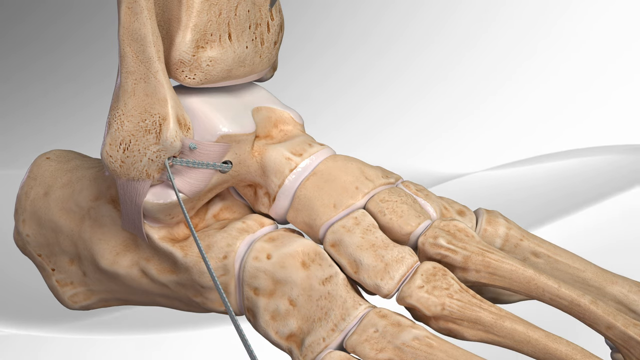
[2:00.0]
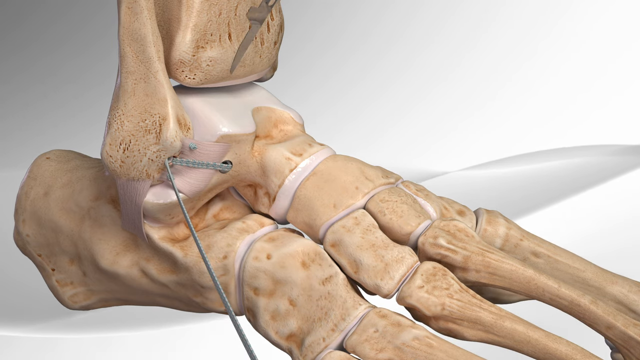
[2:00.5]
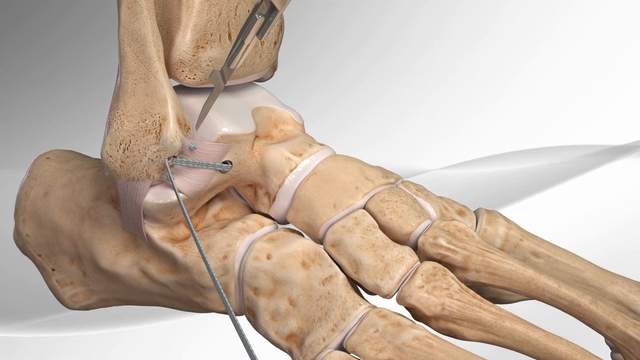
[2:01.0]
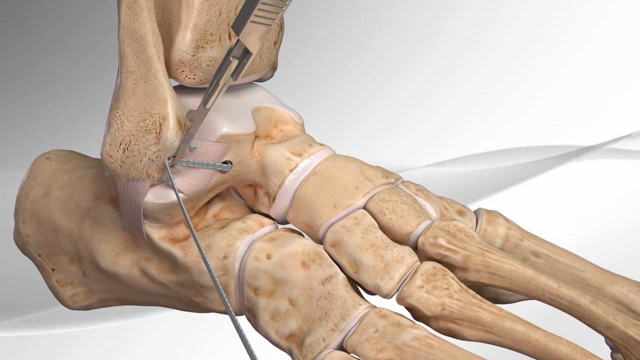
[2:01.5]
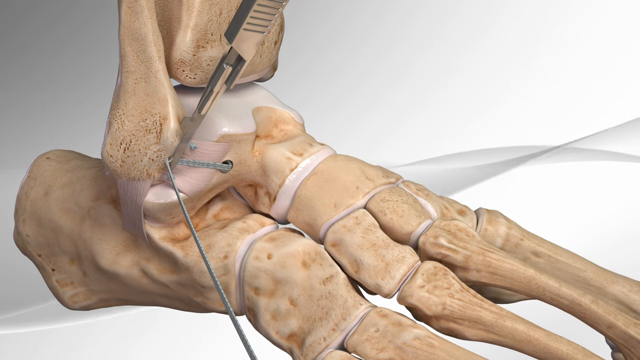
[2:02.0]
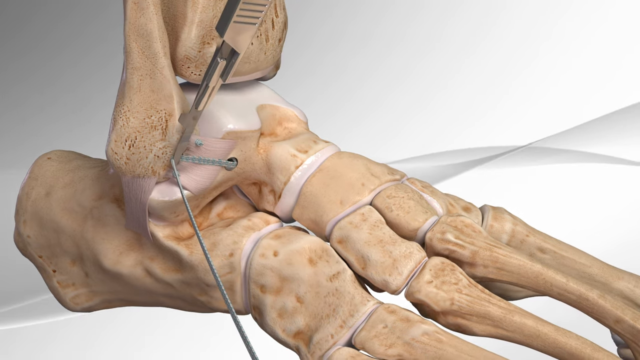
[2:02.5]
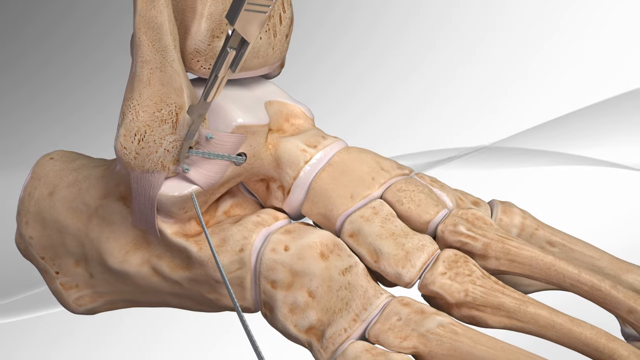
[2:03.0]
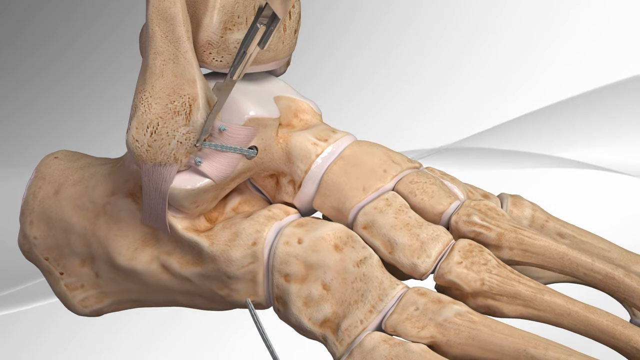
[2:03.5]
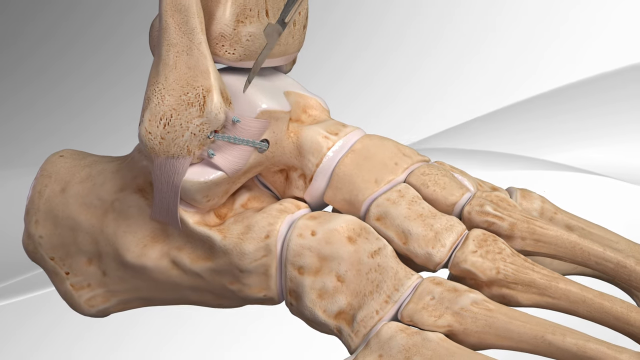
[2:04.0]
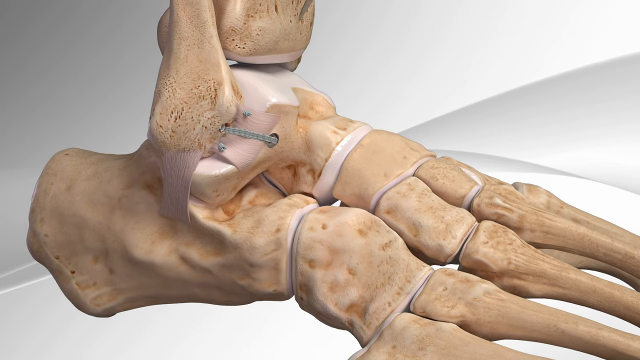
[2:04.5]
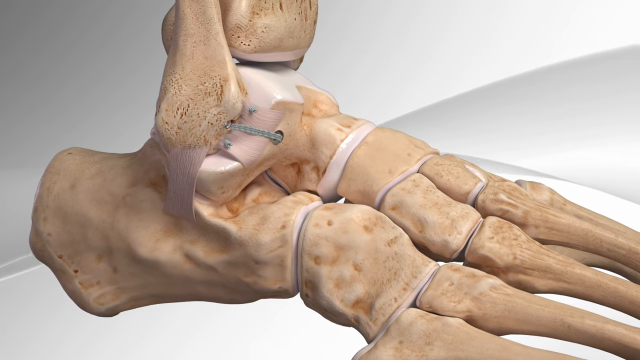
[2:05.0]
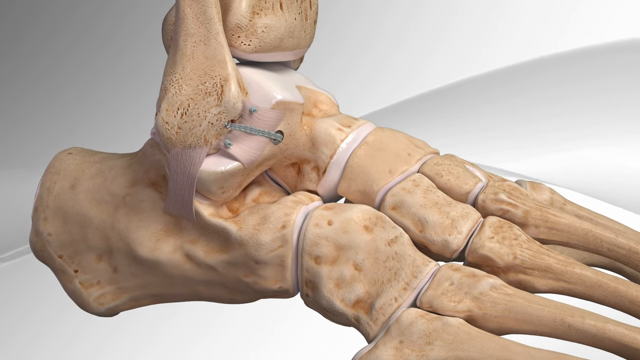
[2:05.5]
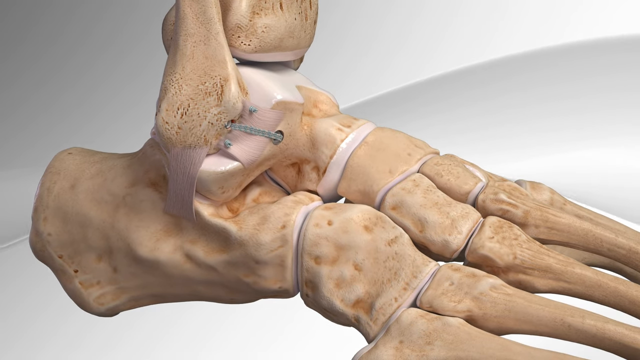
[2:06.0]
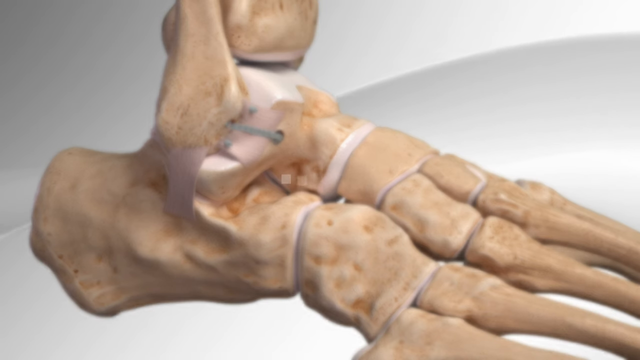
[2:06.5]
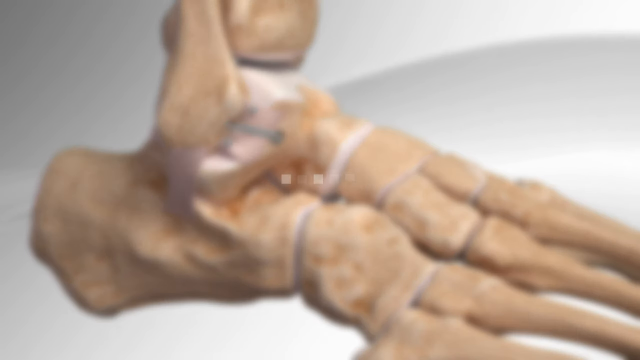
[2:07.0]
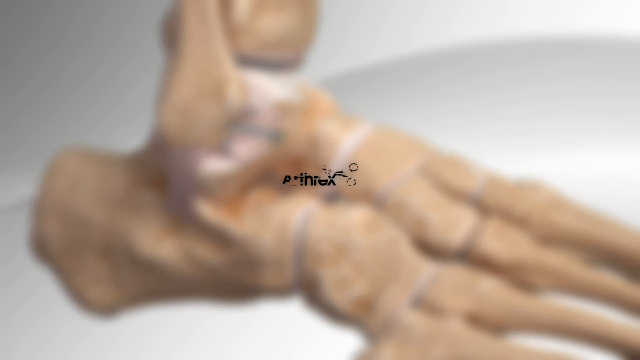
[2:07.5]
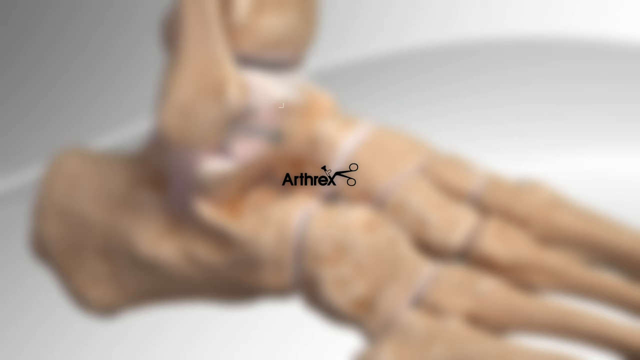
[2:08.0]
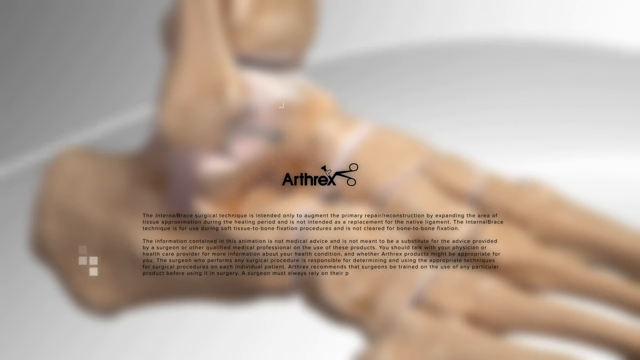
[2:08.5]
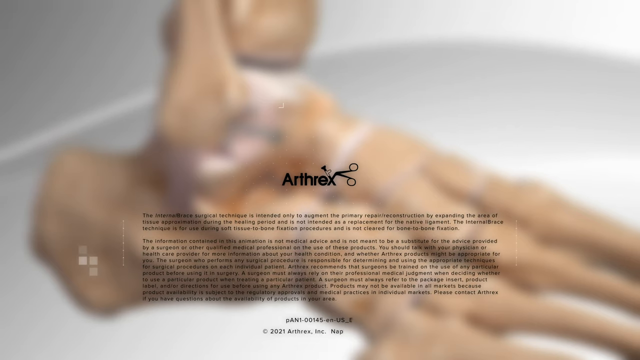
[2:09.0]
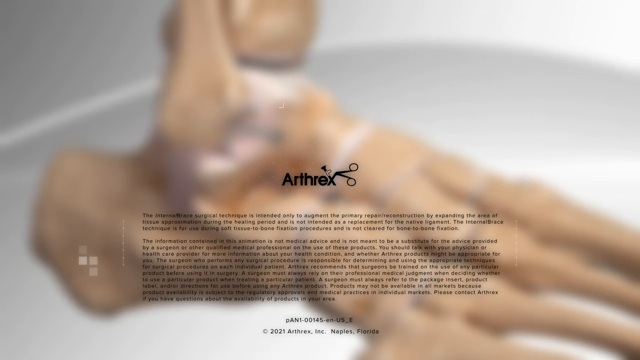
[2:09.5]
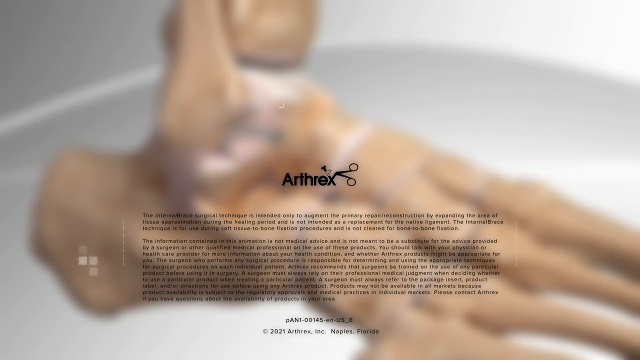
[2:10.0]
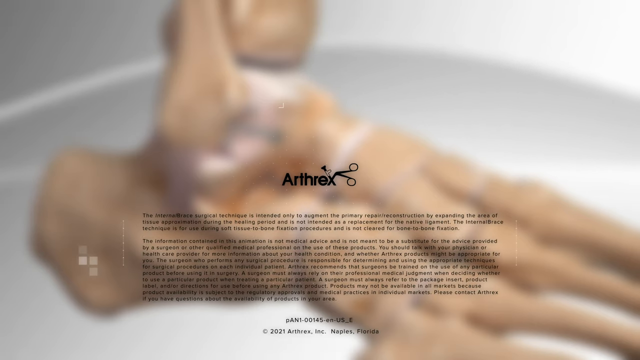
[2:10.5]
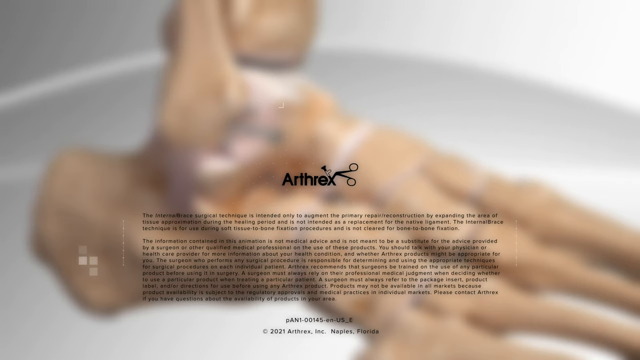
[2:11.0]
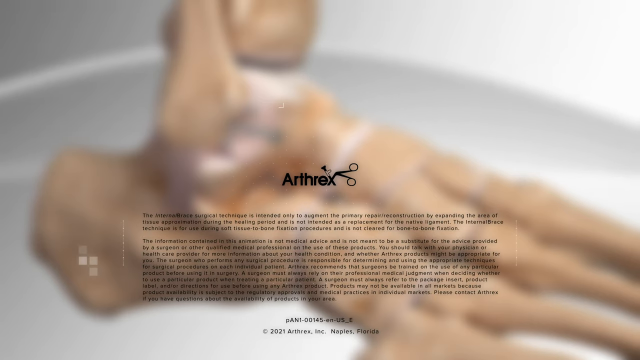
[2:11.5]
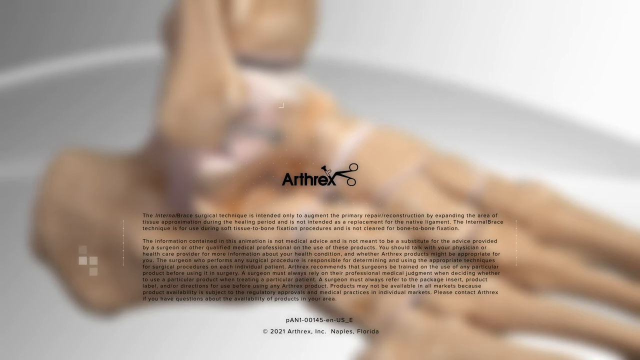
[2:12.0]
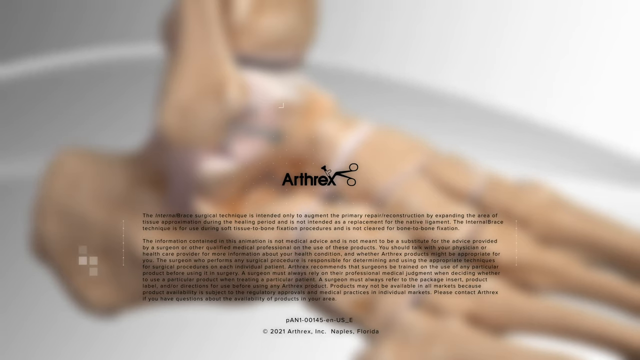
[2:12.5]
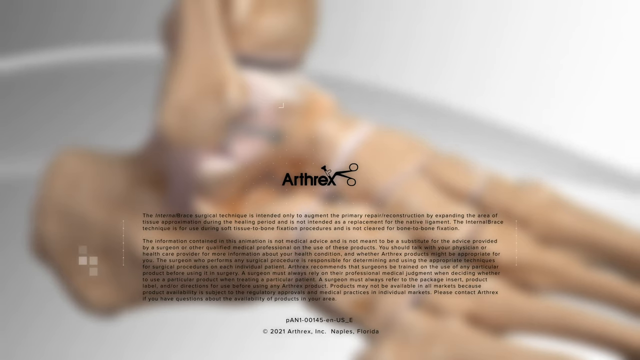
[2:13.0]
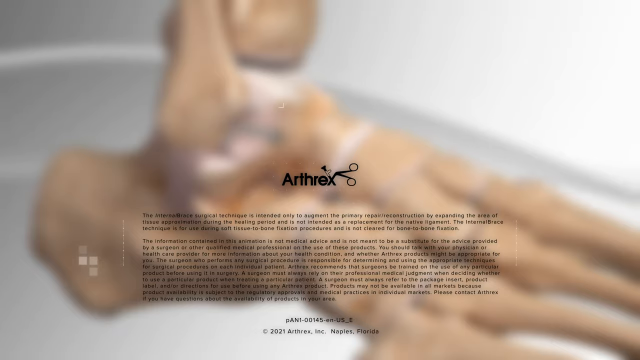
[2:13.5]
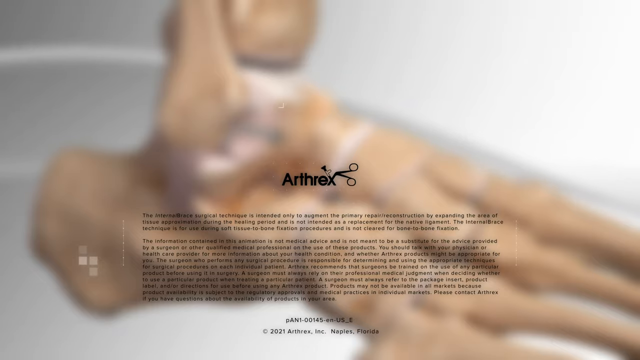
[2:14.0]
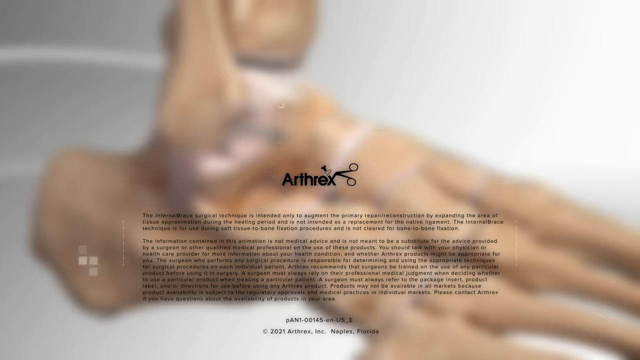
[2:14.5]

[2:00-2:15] With the wire pushed into the hole between the two pins, the screwdriver-looking instrument is no longer on screen, and the wire has an extra piece hanging out that was not pushed into the hole. A scalpel comes in and cuts off that excess. The first original hole has a pin in it, as does the second, and between them is the fourth hole that was drilled; to the right and below is the third hole, from which the thicker wires come out and go into the hole between the pins. The ligament is reattached. Then the screen kind of looks like it is loading, and "anthrax" appears in black, with something like a hemostat coming off the X, above a paragraph of words too small to make out.